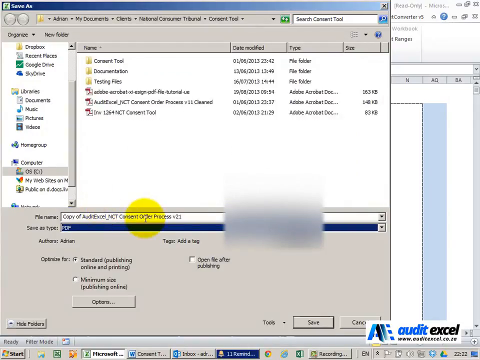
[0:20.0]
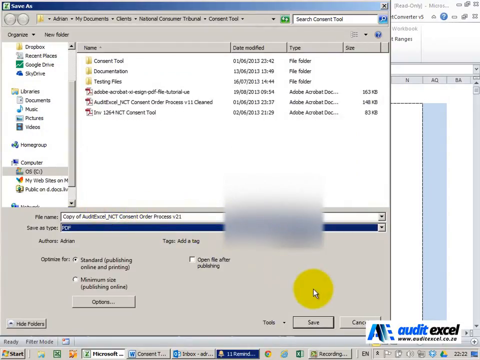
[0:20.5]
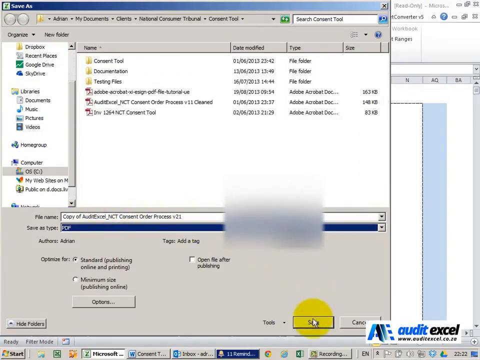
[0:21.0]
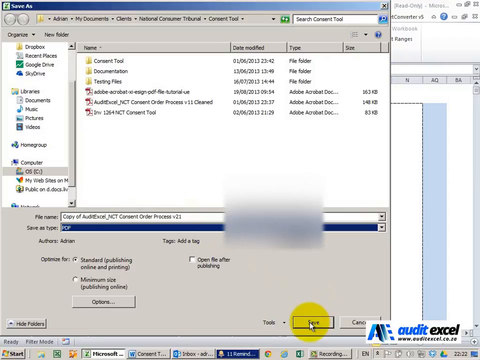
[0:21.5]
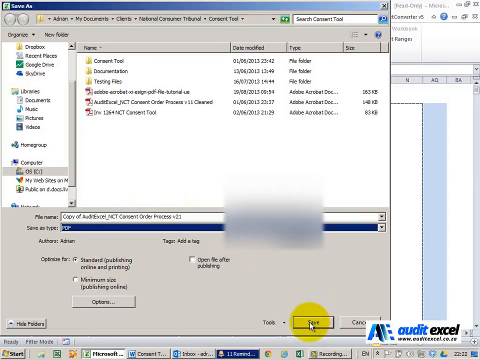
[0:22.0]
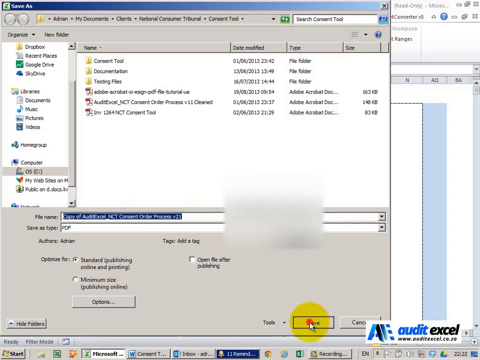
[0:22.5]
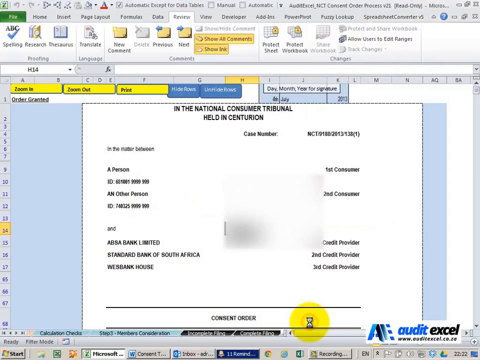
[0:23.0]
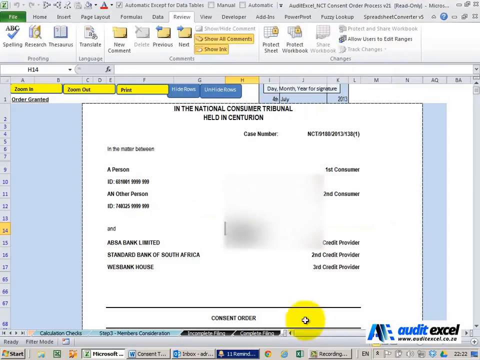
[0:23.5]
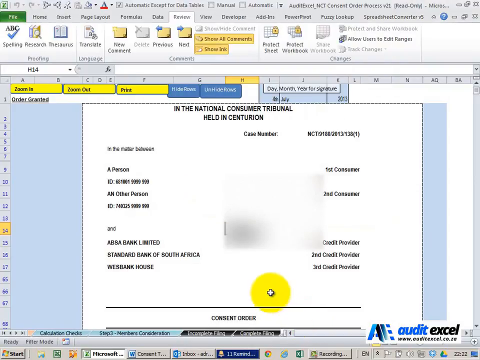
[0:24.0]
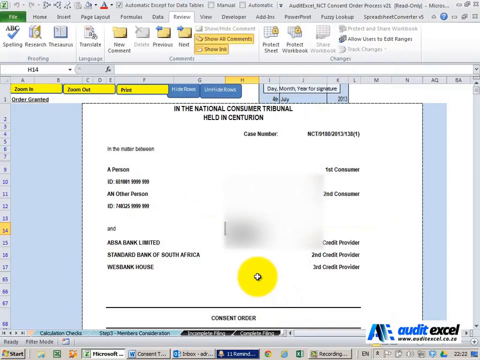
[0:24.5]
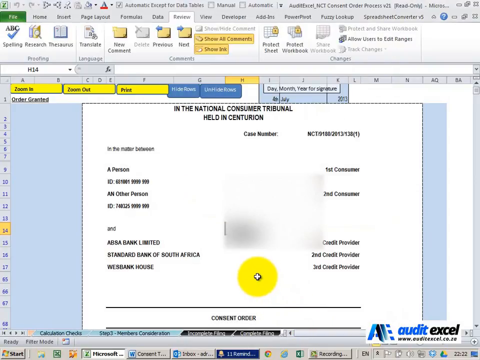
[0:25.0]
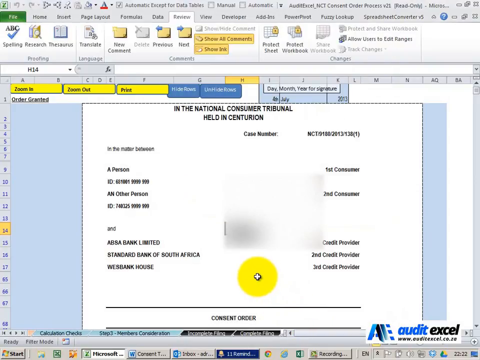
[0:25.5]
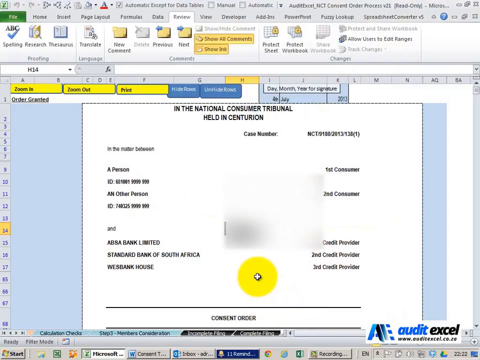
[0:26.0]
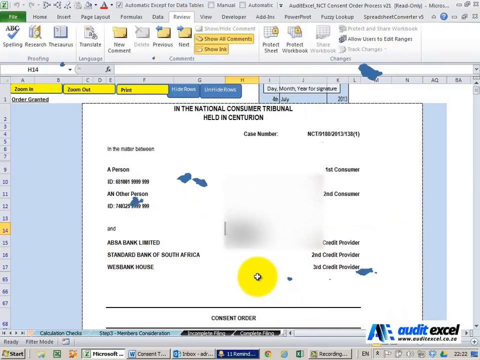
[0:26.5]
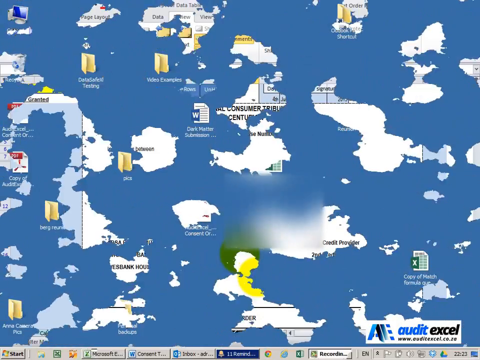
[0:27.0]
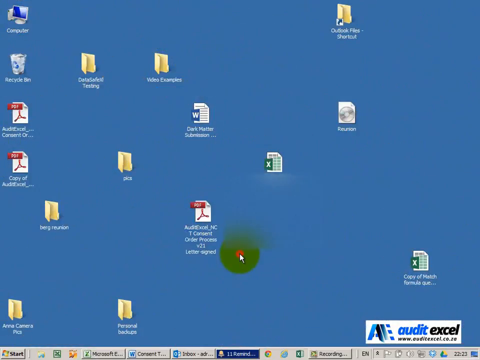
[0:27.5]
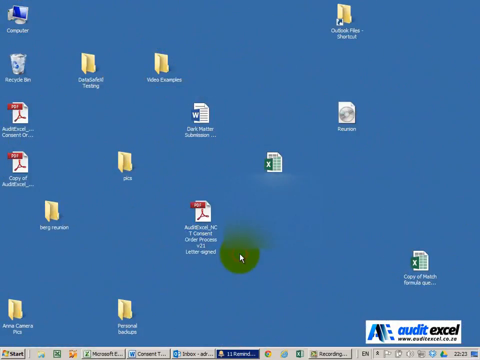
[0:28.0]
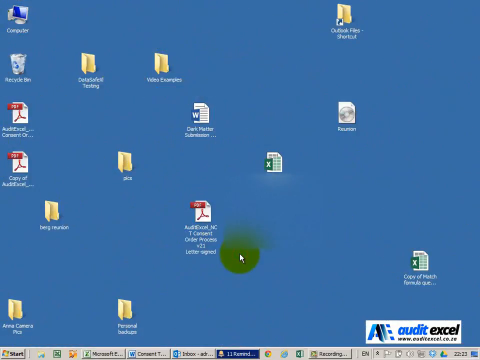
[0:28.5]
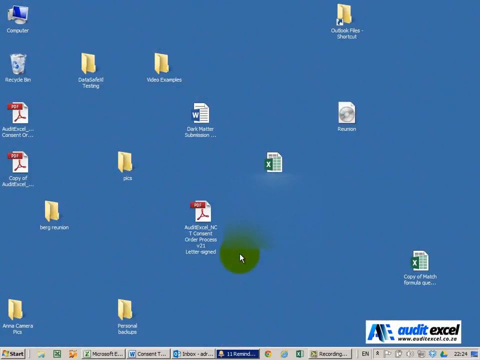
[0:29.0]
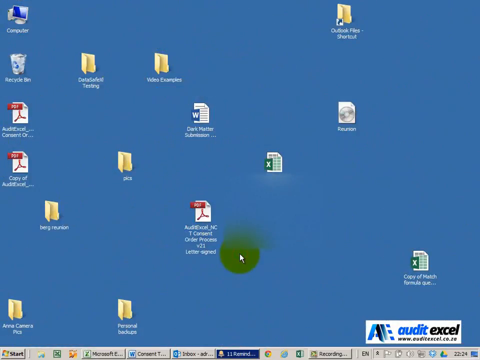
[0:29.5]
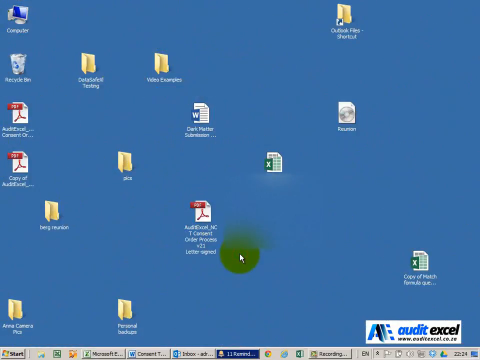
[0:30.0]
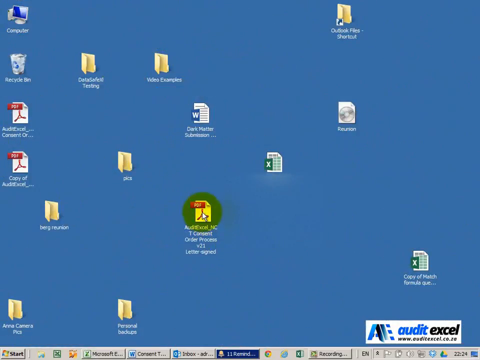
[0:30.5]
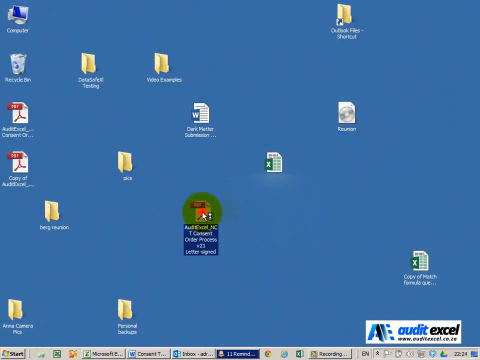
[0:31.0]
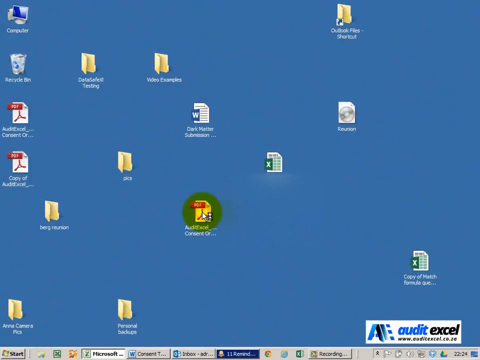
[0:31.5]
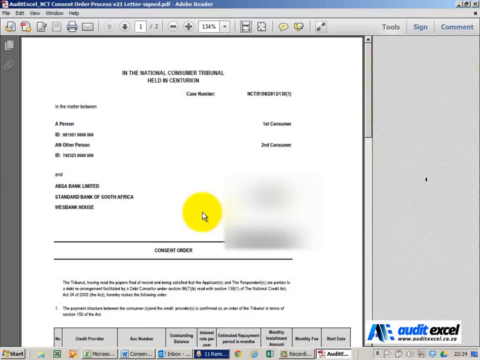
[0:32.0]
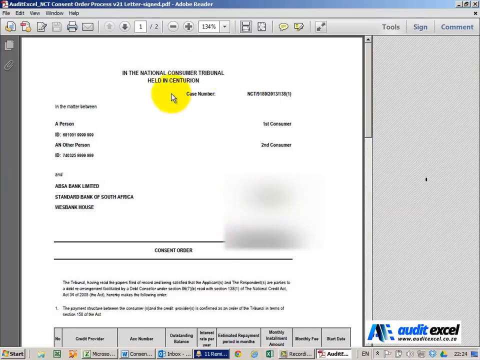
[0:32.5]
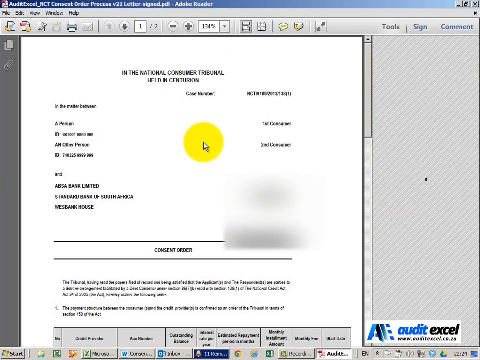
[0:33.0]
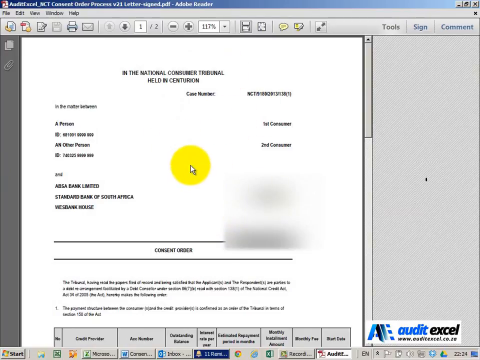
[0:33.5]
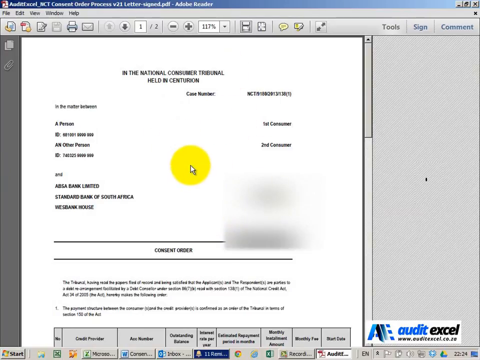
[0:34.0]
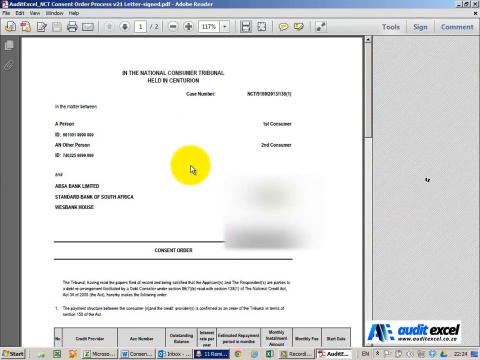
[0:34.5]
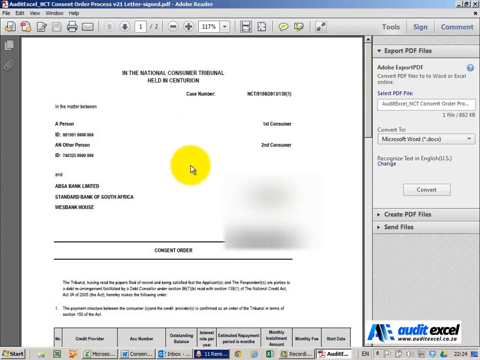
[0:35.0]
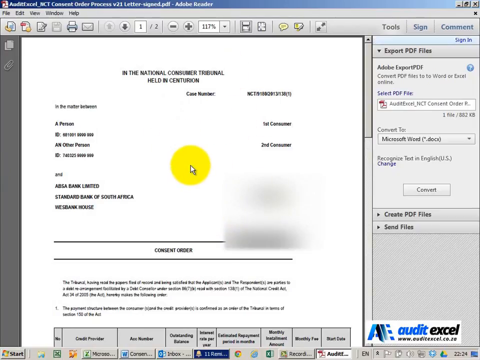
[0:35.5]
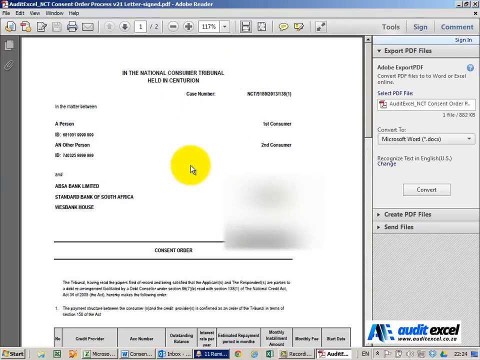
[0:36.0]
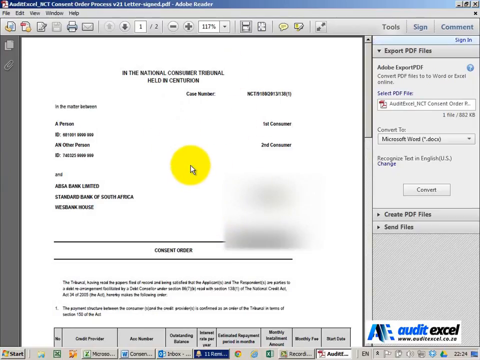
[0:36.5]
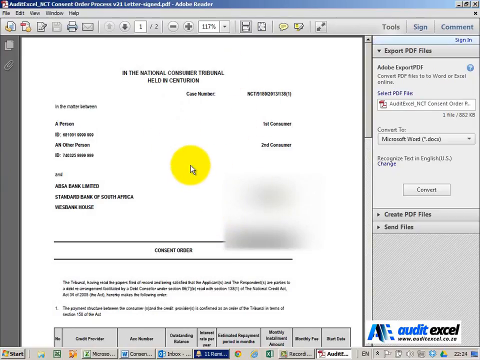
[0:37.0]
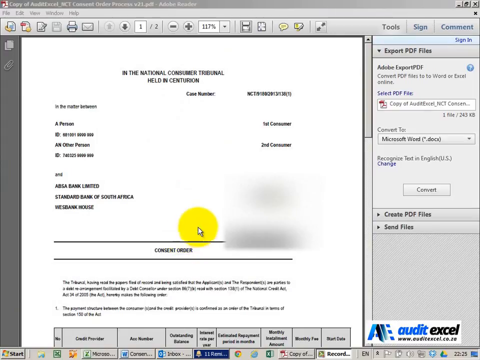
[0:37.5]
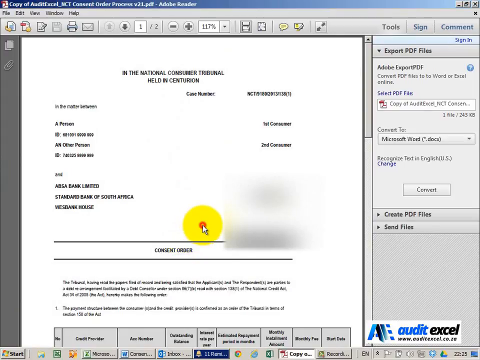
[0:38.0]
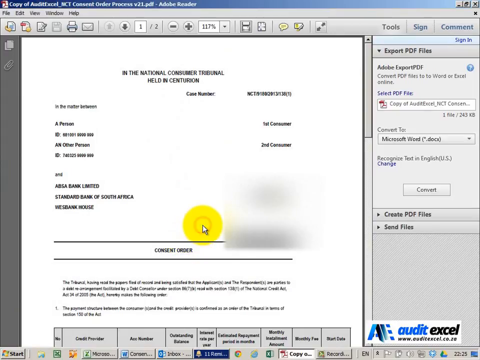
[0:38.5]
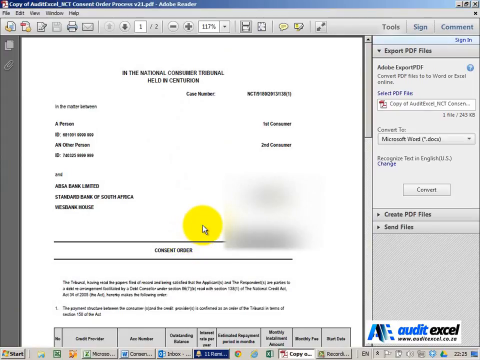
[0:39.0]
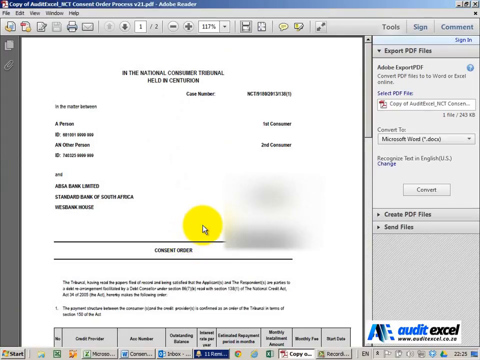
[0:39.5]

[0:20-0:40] The site is still on screen, now with some information blurred out, apparently personal information. The screen fades back to the Windows desktop. Another file for the National Consumer Tribunal held in Centurion is opened, and the user looks through various files, opening windows and seeking out documents; they seem to be searching for a particular document. The mouse pointer is highlighted in yellow. The video appears to be a step-by-step tutorial.